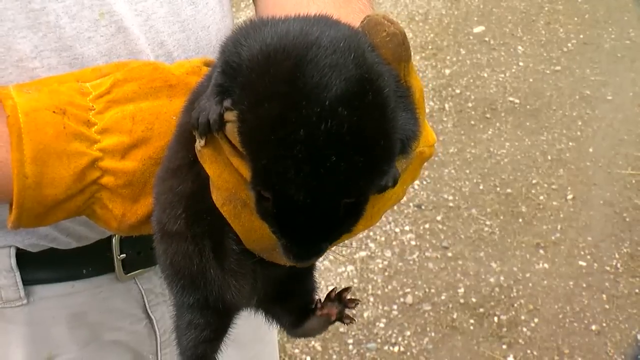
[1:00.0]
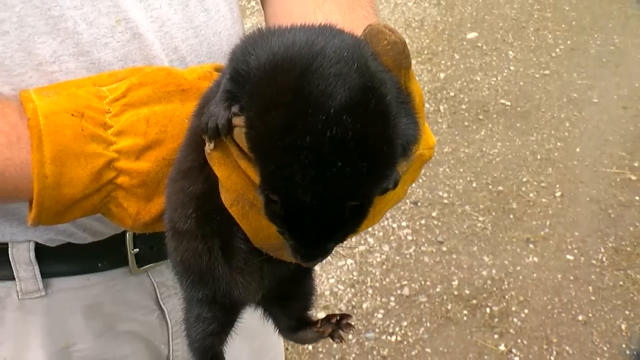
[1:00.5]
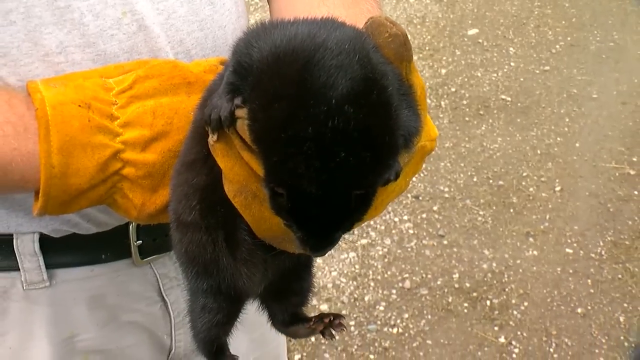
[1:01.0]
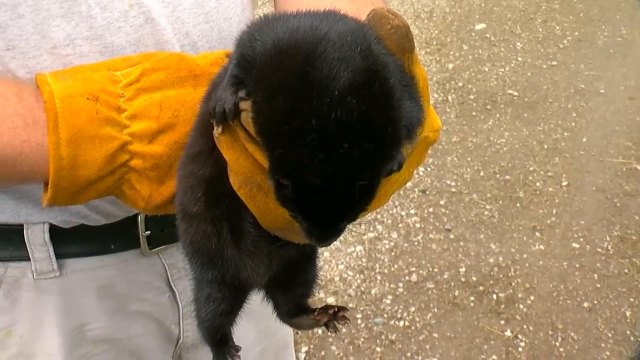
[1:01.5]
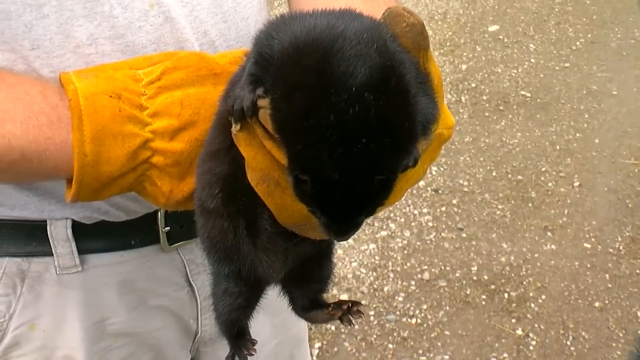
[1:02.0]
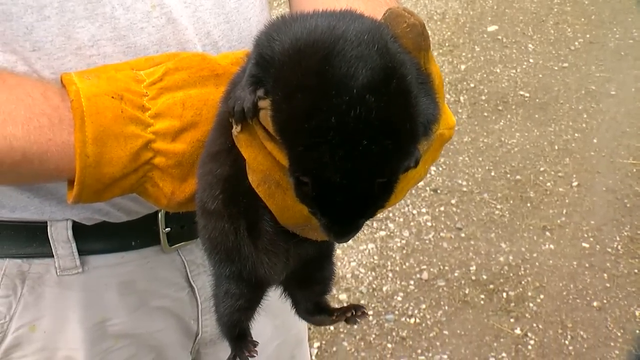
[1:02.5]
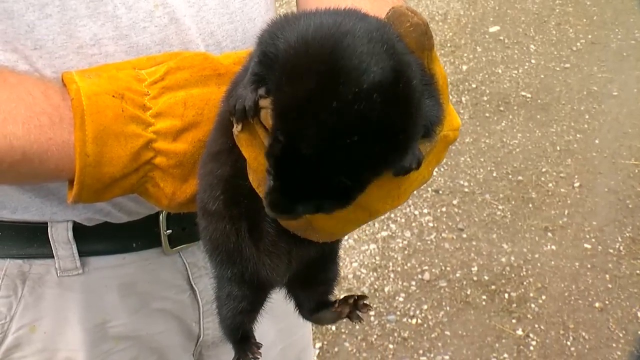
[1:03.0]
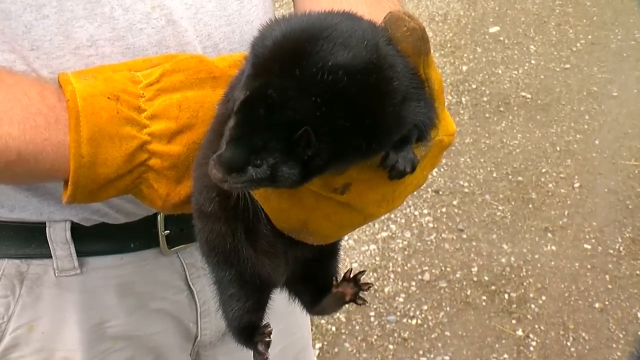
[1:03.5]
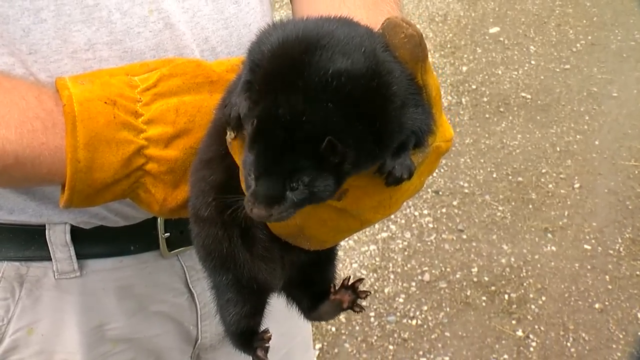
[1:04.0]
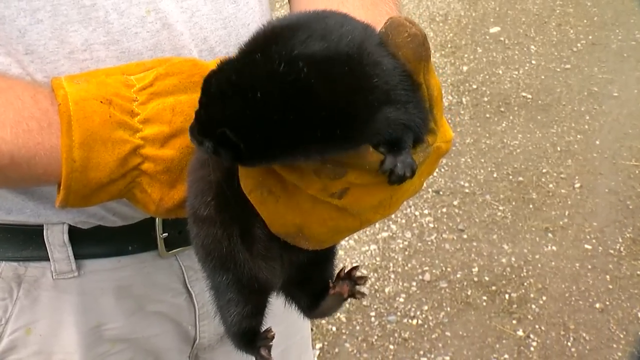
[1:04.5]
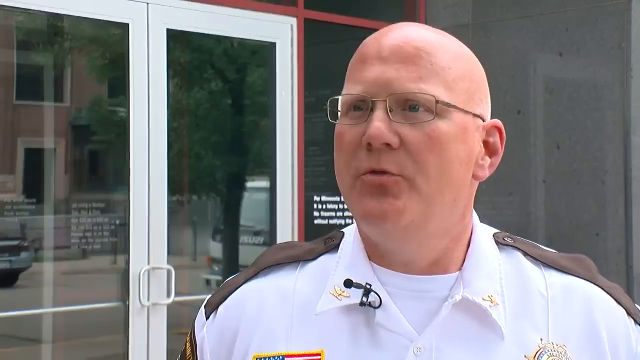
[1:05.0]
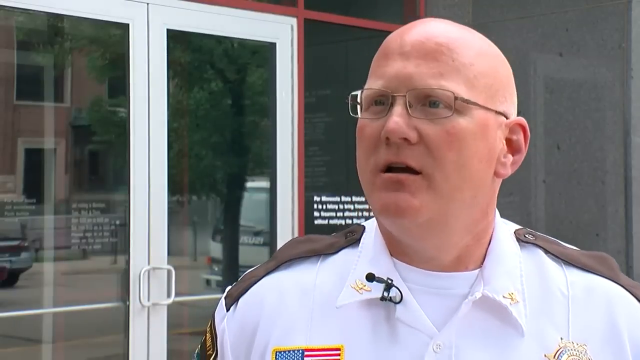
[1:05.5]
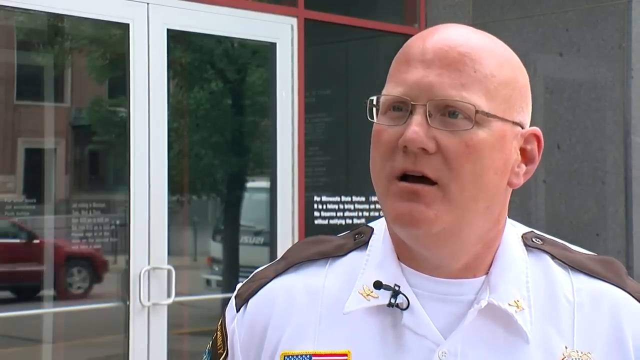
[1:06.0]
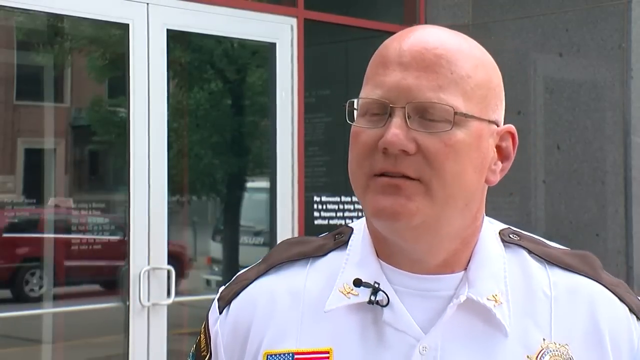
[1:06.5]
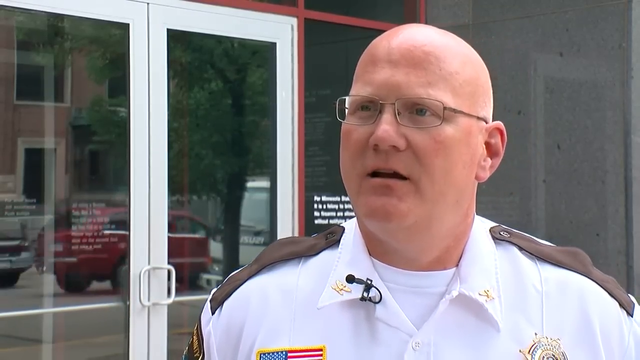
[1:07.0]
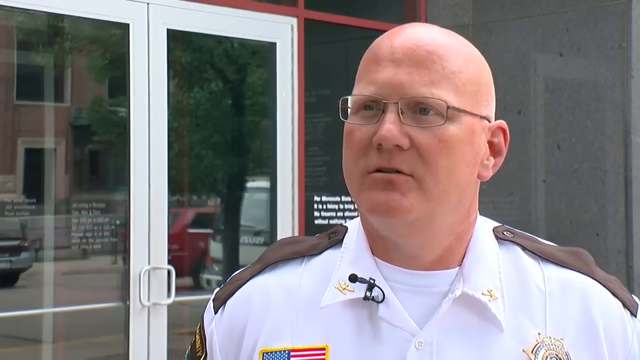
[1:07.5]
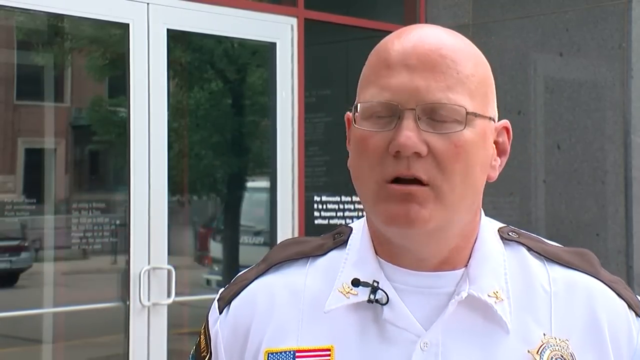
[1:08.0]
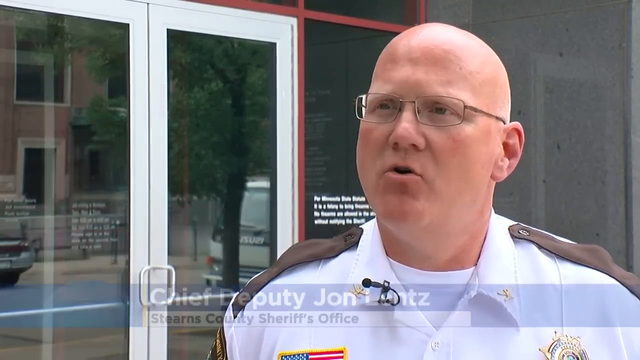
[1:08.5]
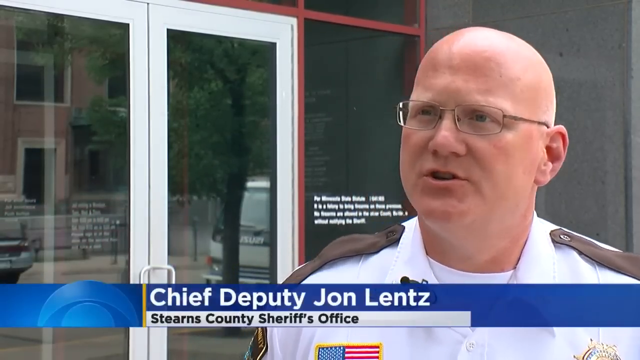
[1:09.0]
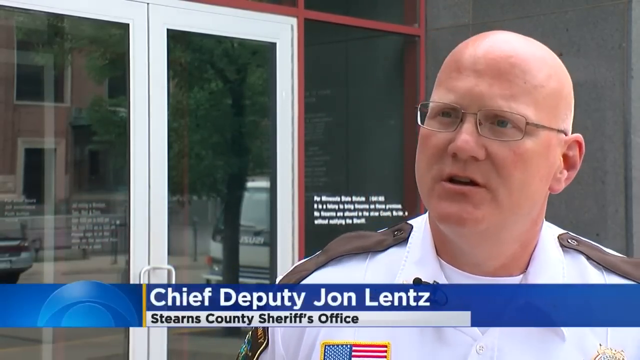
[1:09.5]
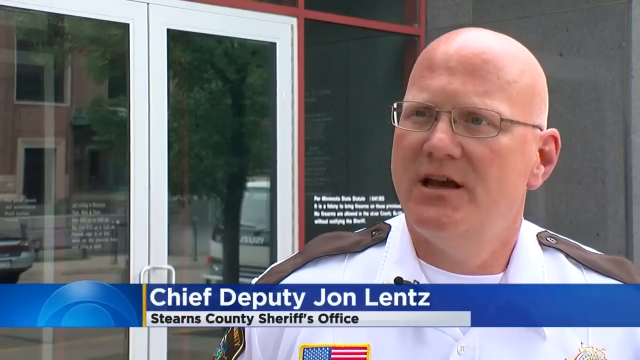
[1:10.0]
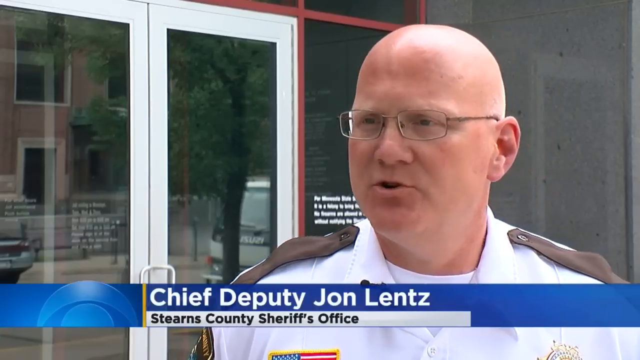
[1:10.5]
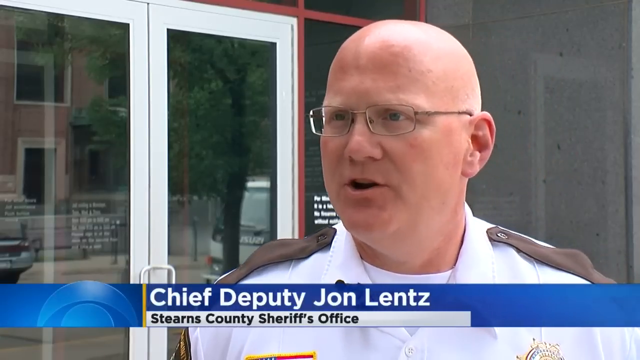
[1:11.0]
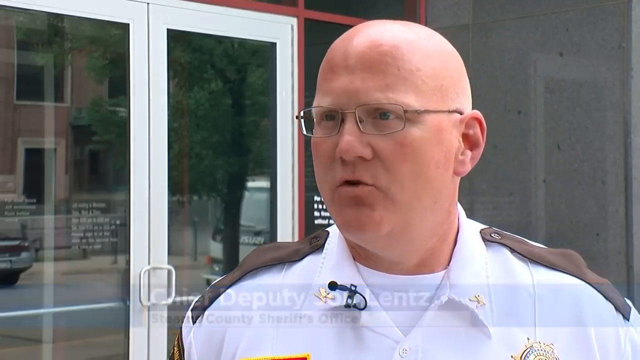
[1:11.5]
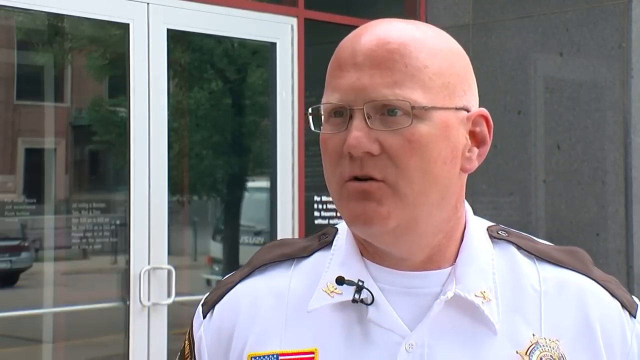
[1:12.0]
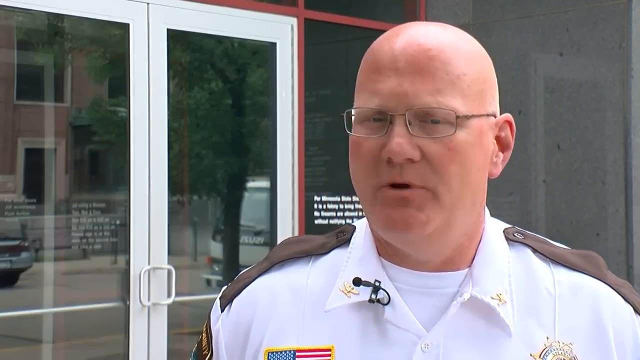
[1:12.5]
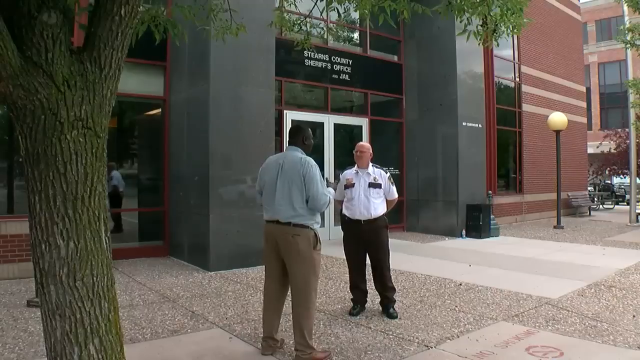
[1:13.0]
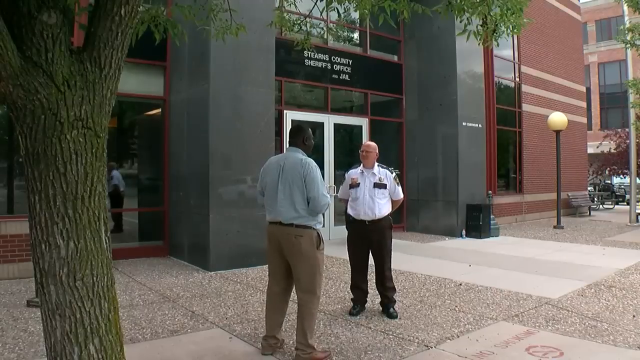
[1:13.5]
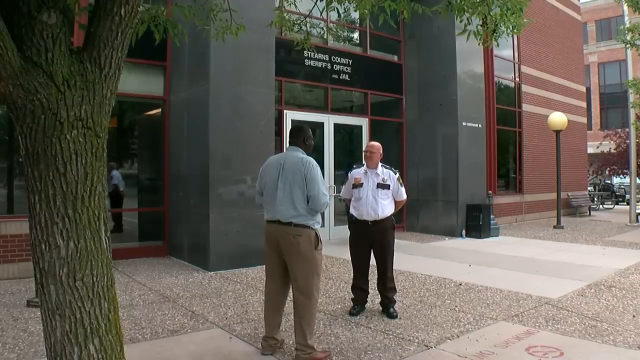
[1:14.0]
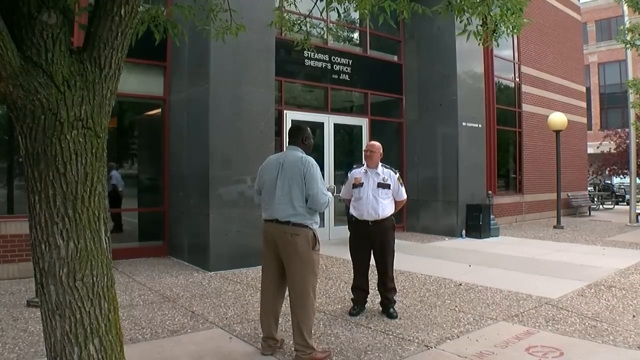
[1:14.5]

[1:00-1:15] The man holds the mink in his hand with the yellow glove; his belt, pants and shirt are visible, but few other details of him can be made out. The black-furred mink is kind of twitching and looking around. Next comes a shot of a law enforcement officer in a white formal outfit, with a visible police badge, little pins on his collar and some sort of badging on his shoulder. He is an older man, probably in his 40s or 50s, bald, with glasses. A caption appears identifying him as "chief deputy John Lentz of Stearns County Sheriff's Office." The camera then moves outward, revealing the news reporter interviewing him, seen only from the back: a Black man with short hair wearing khakis, boat shoes and a blue button-down shirt. More of the surroundings are visible, including a good-sized building with the sign "Stearns County Sheriff's Office and jail," some cars on the road and some other brick buildings. The two are standing on the sidewalk in front of the office.